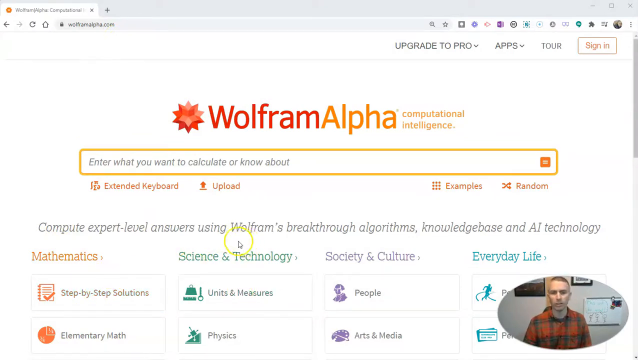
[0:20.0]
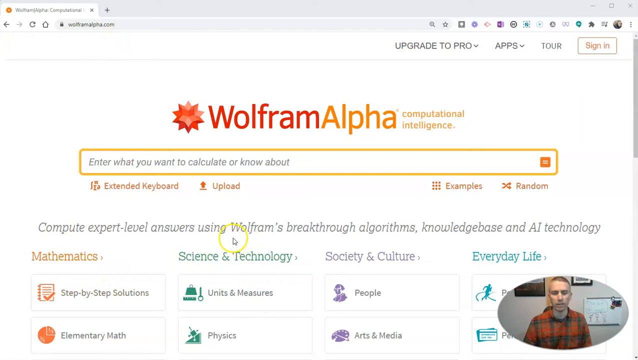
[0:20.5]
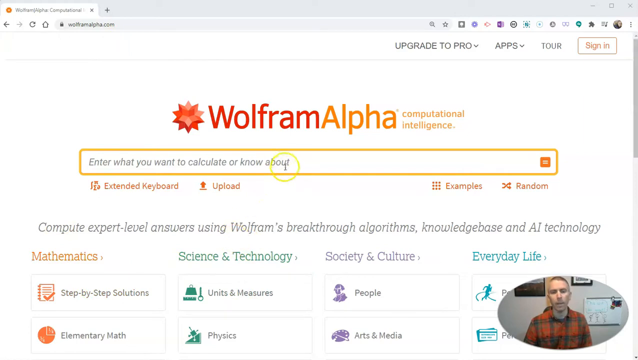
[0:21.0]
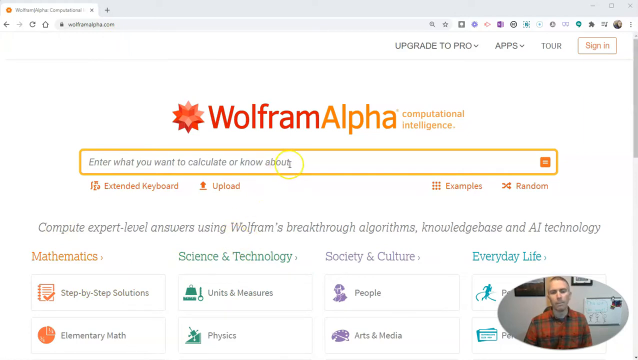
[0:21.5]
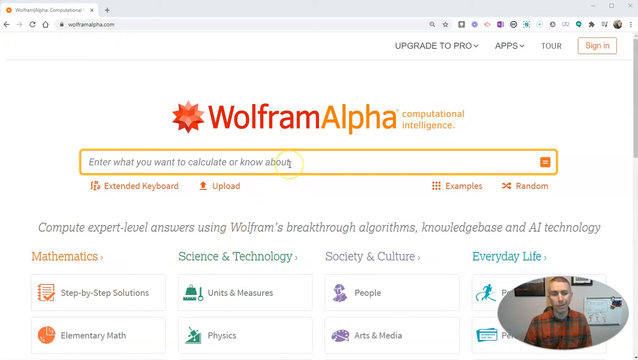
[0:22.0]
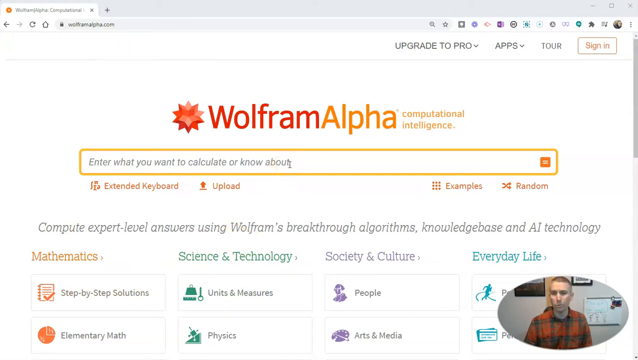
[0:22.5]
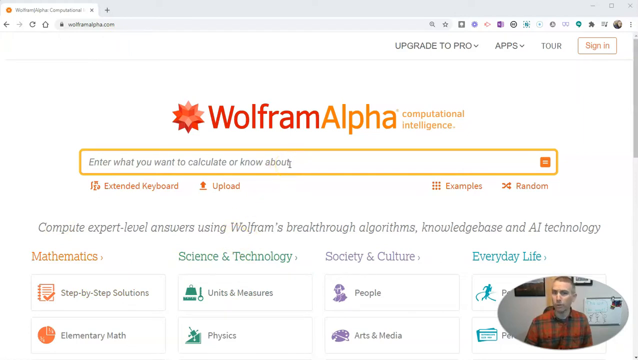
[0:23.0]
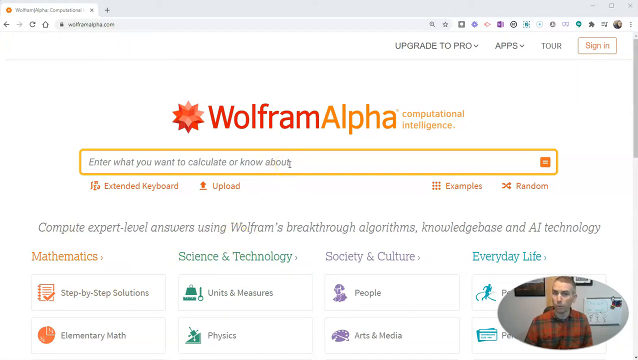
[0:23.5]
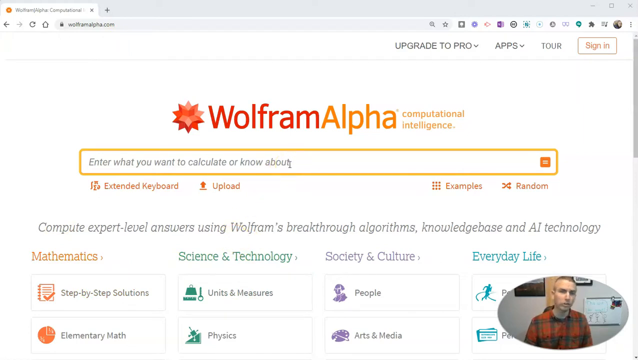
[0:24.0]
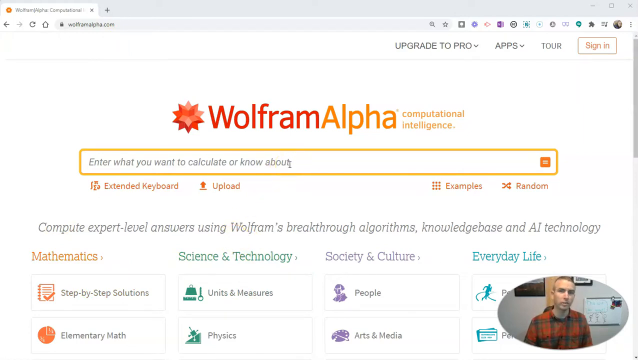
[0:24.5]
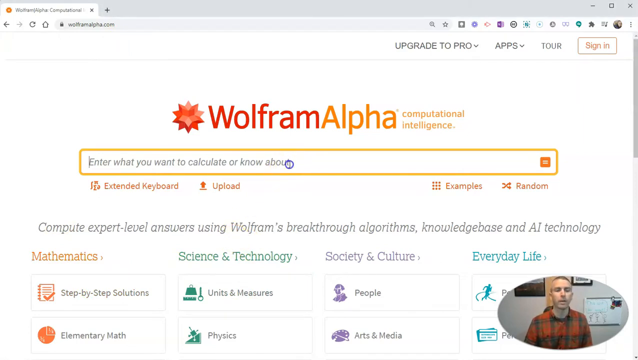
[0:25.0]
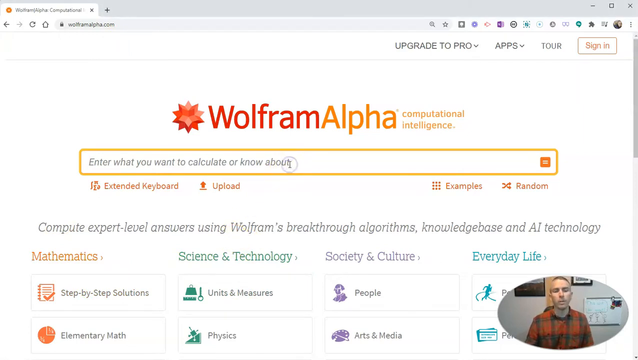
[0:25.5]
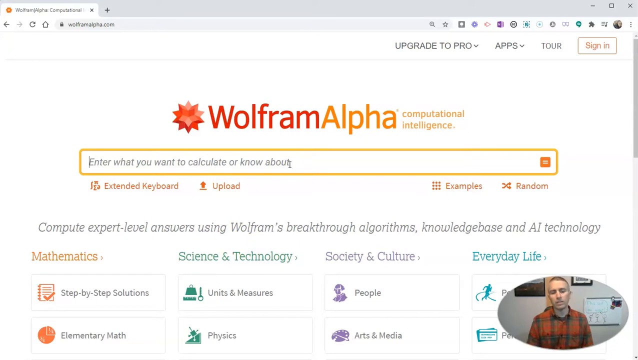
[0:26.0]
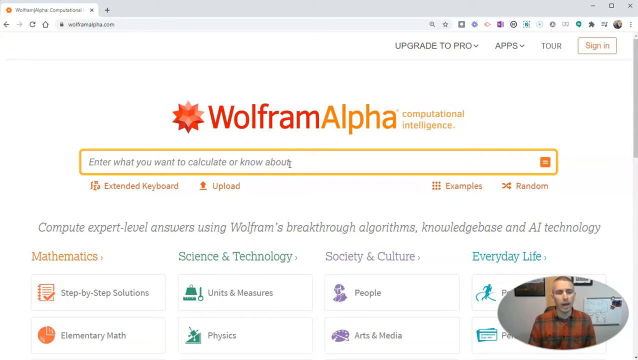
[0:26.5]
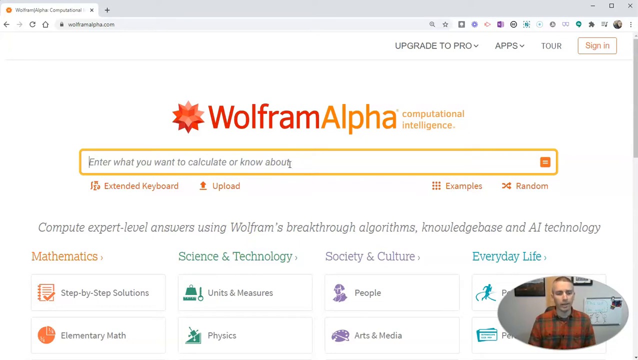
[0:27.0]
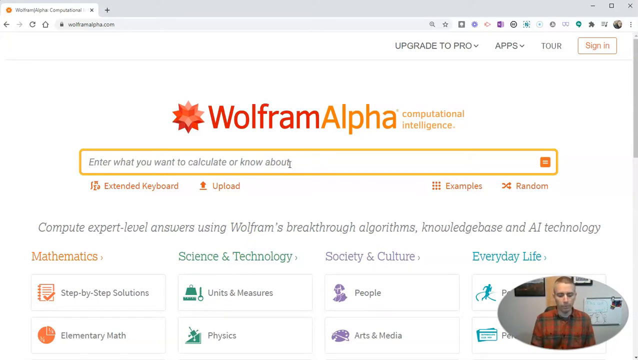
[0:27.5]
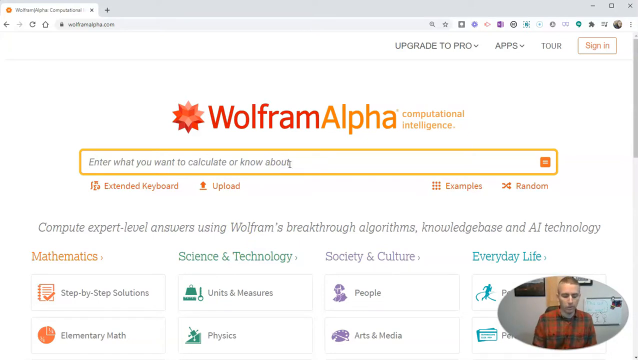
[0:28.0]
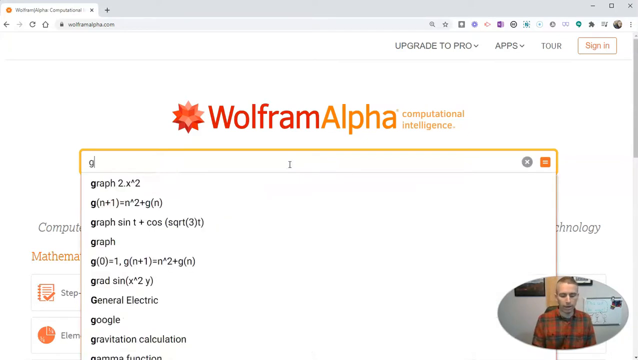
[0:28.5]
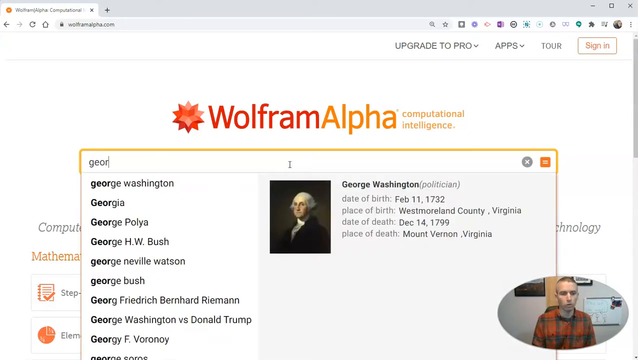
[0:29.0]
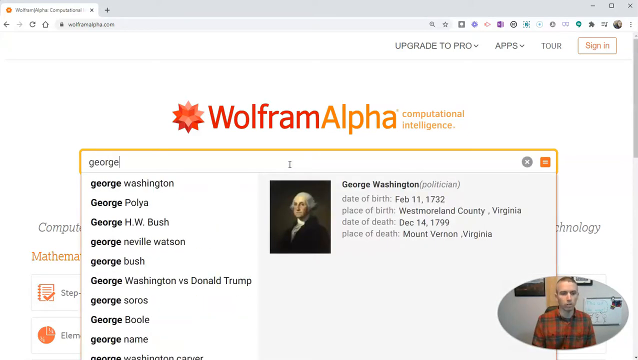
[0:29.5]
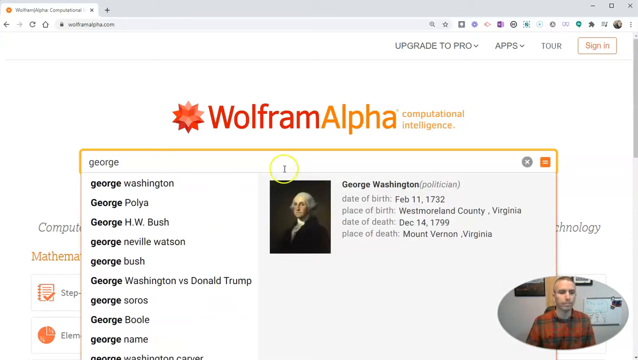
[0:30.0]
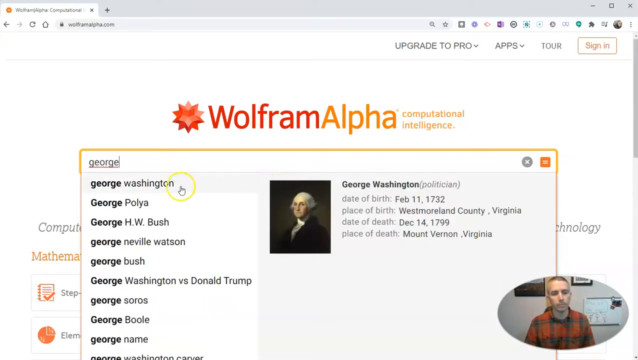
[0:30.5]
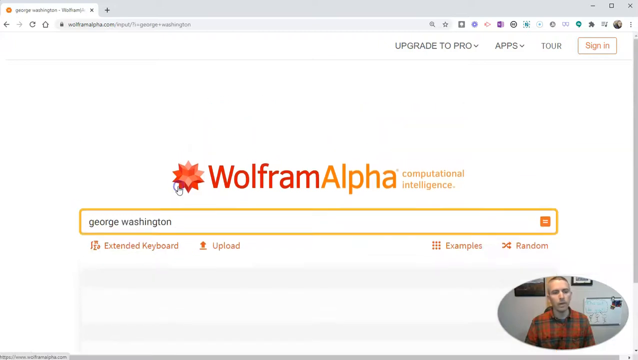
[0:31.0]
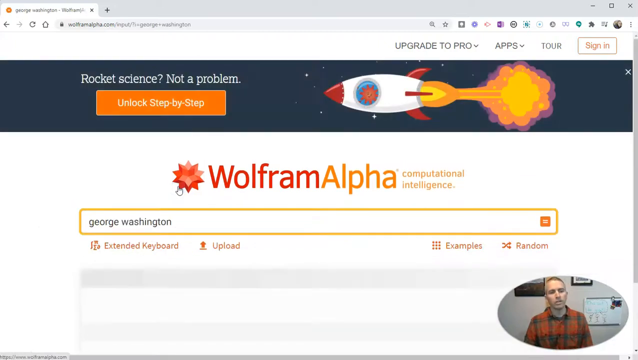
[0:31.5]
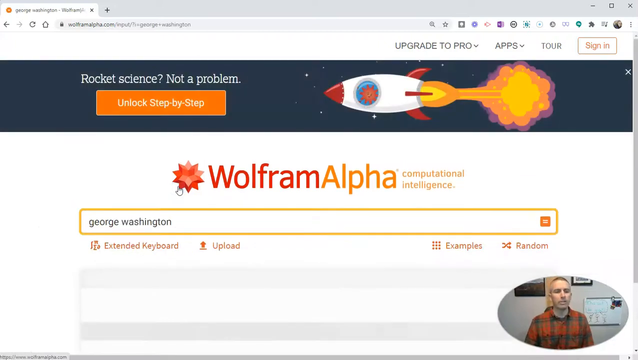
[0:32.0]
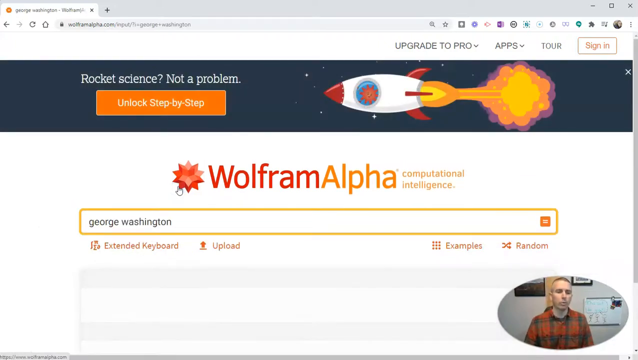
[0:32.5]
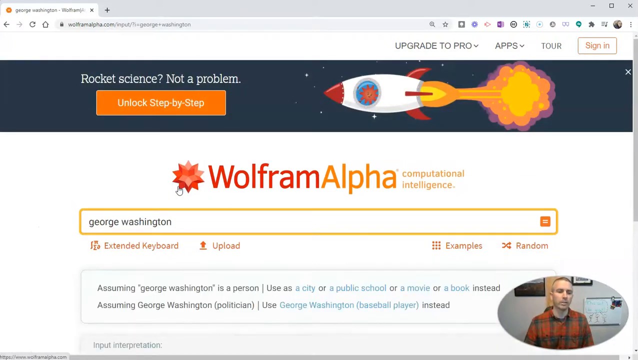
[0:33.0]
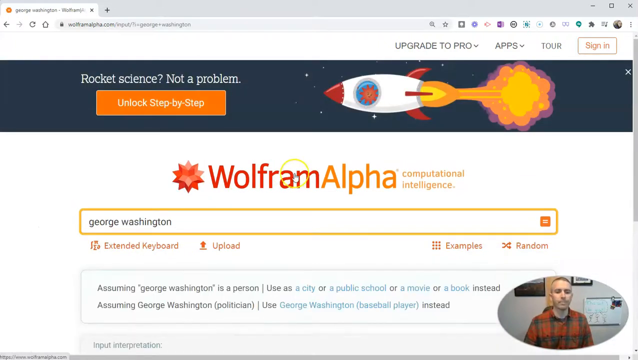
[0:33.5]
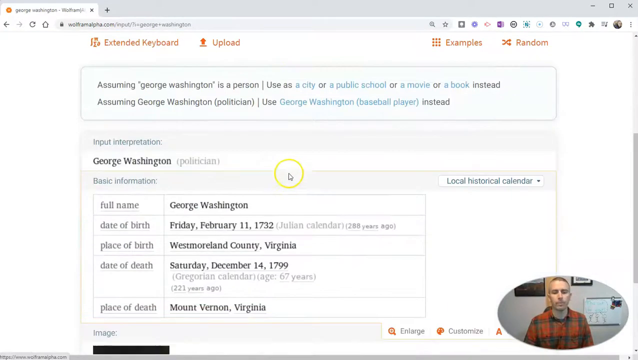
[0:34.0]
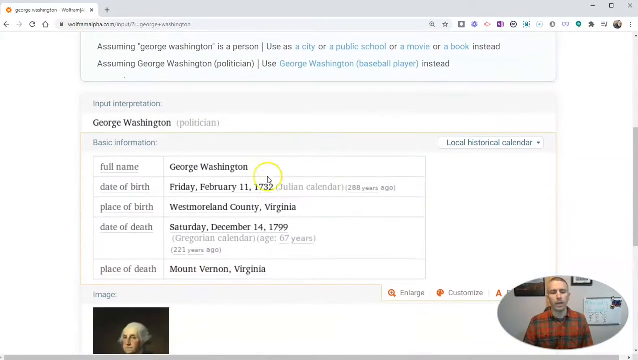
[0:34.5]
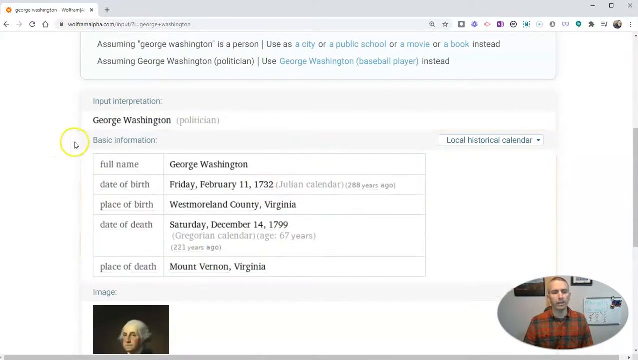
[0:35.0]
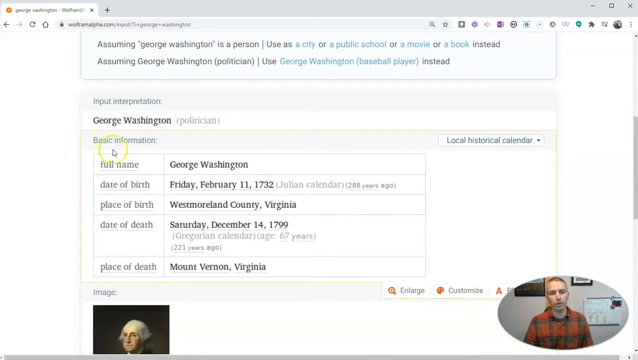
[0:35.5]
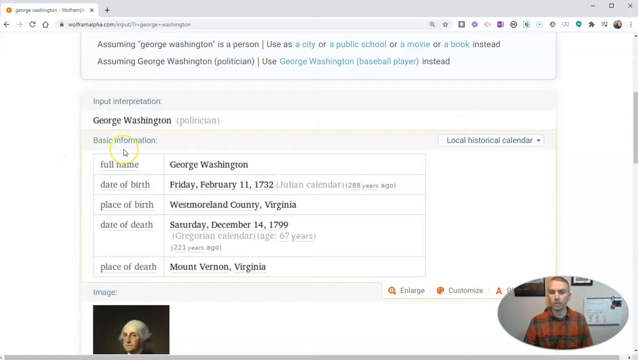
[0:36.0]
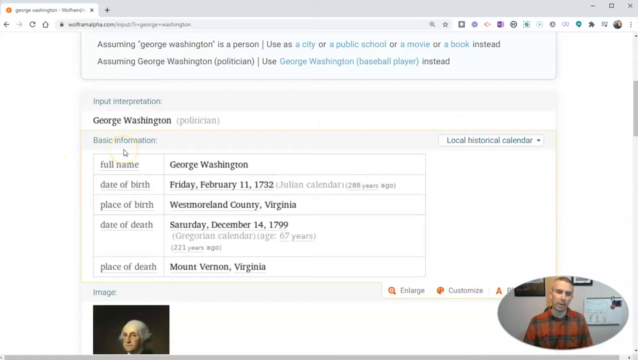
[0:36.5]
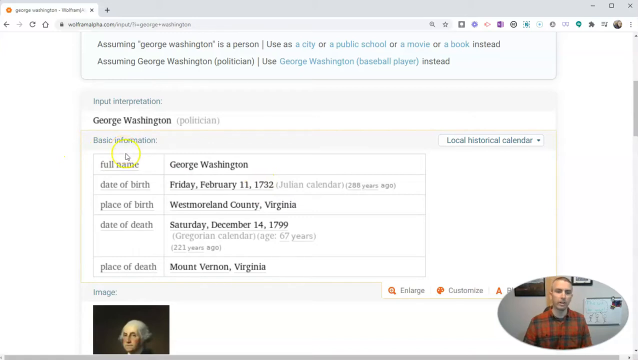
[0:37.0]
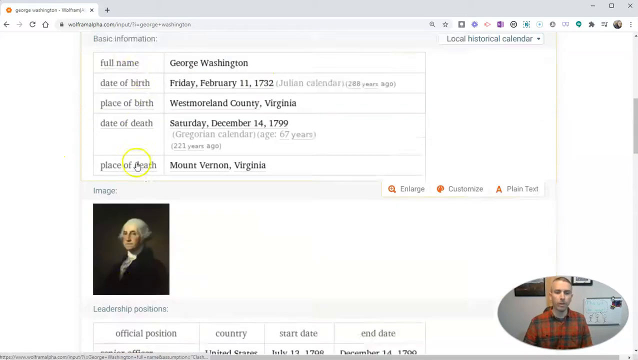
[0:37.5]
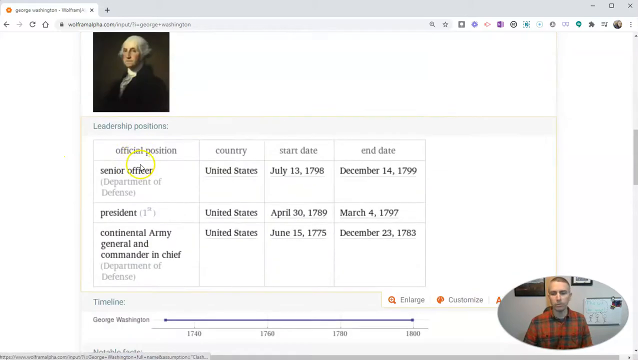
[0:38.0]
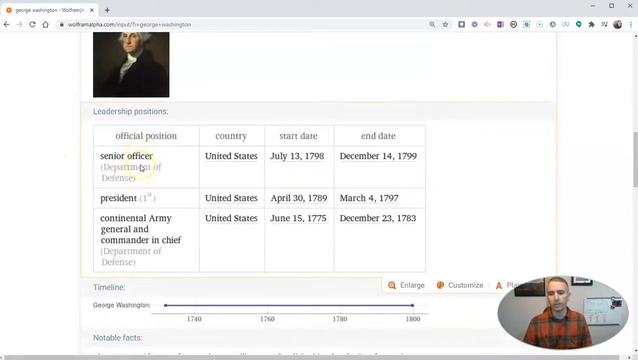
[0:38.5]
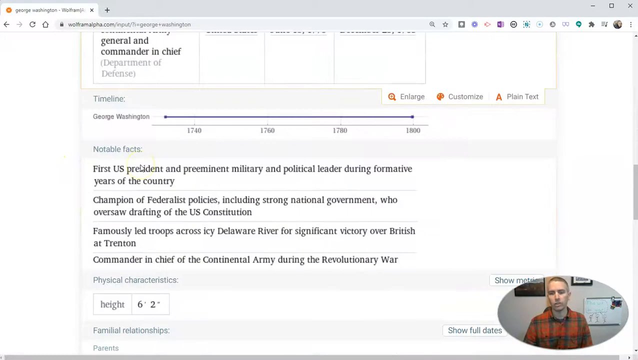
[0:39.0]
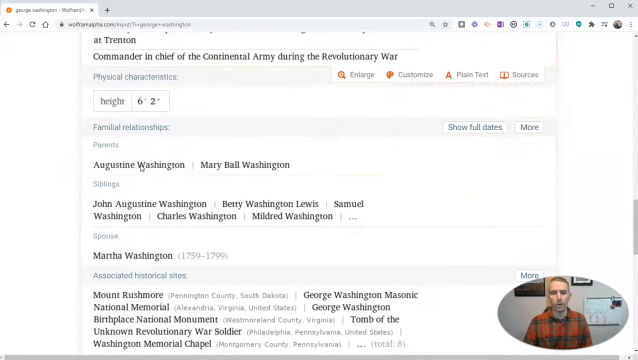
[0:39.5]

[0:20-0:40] On the Wolfram Alpha website, the cursor, which has a yellow circle around it for high visibility, moves up into the search box and clicks inside it; the blue circle gets bigger as it clicks. The user types "George", which brings up a list of search suggestions. The mouse moves over to the right and clicks over George Washington's image on the right, then clicks the first suggestion, George Washington, which fills the search box, and the search runs. The user then scrolls down the page through the information about George Washington.